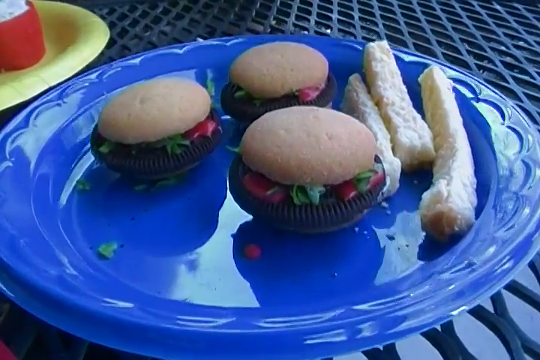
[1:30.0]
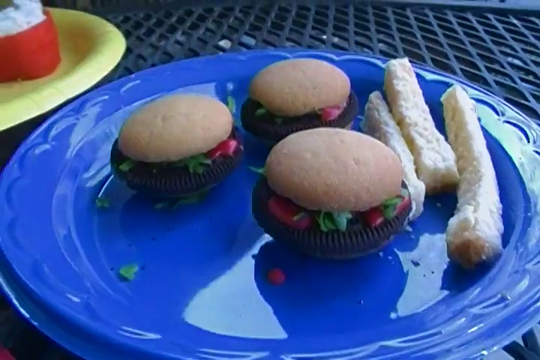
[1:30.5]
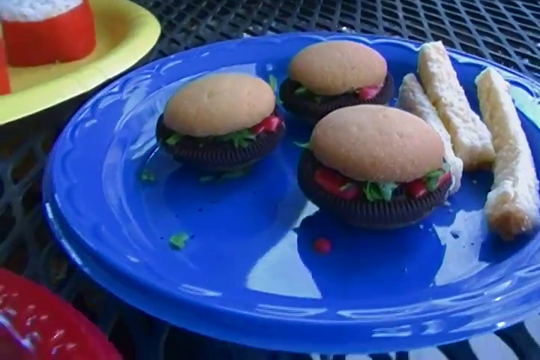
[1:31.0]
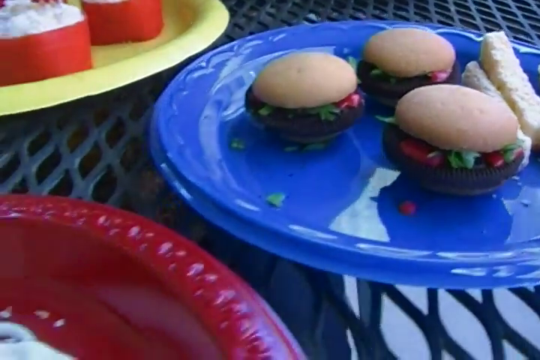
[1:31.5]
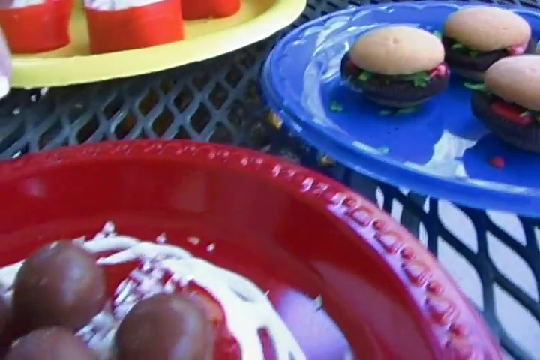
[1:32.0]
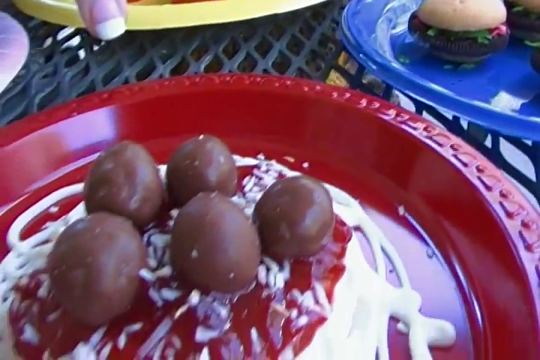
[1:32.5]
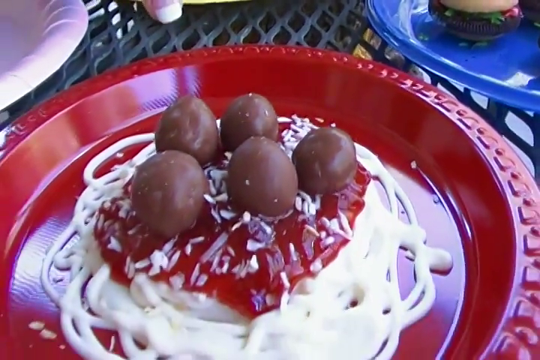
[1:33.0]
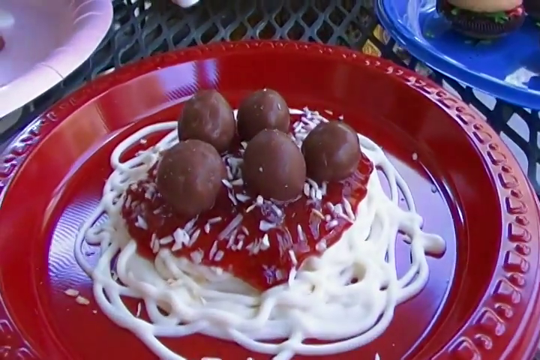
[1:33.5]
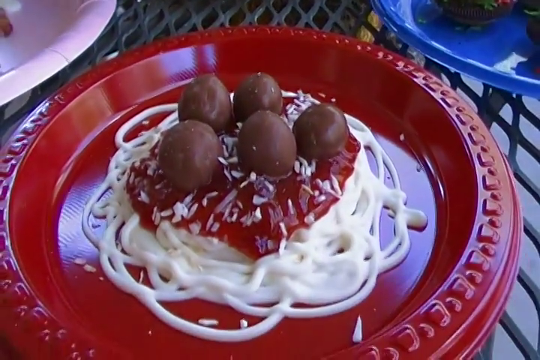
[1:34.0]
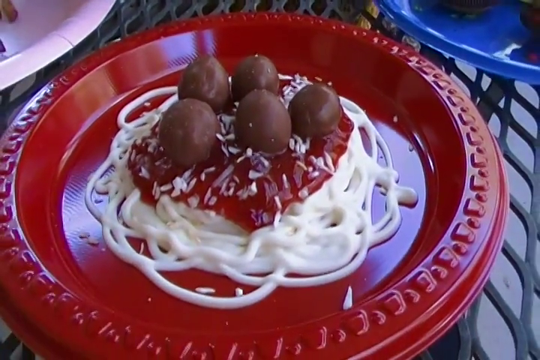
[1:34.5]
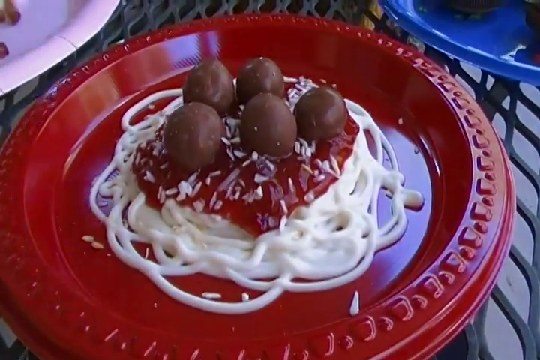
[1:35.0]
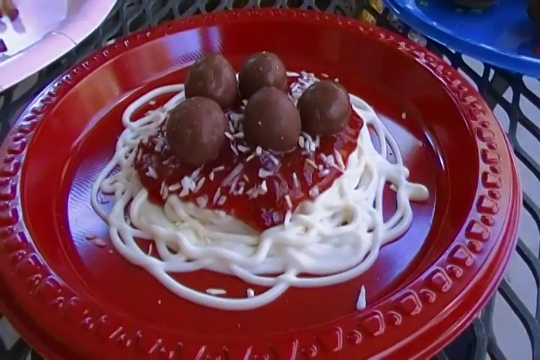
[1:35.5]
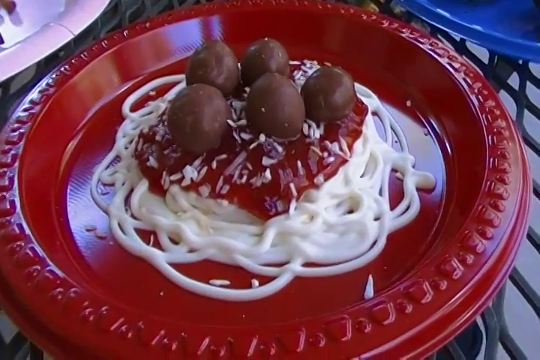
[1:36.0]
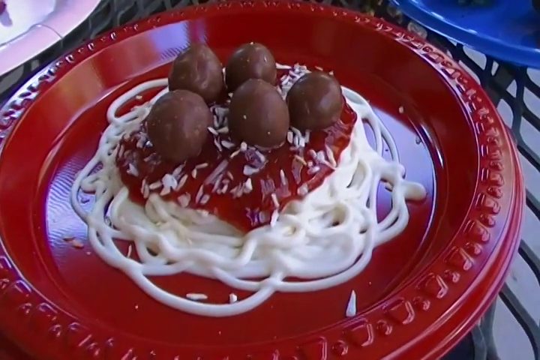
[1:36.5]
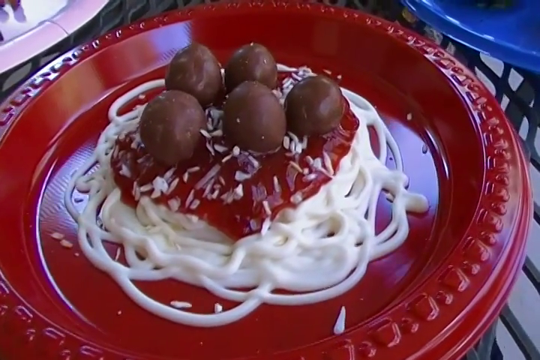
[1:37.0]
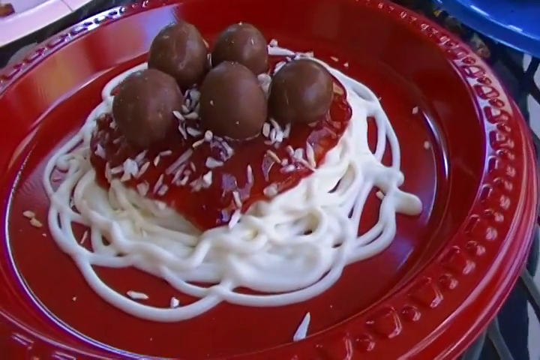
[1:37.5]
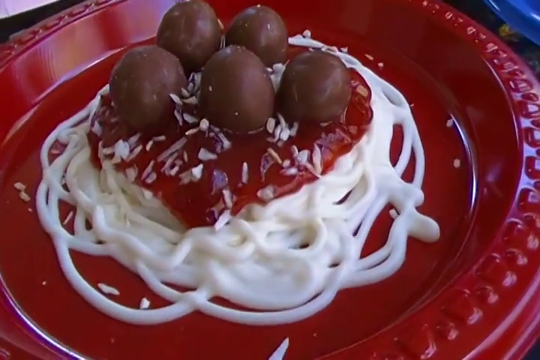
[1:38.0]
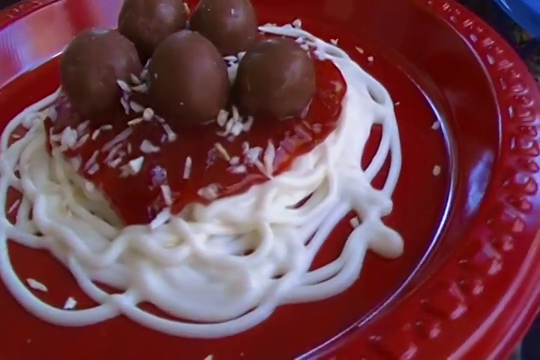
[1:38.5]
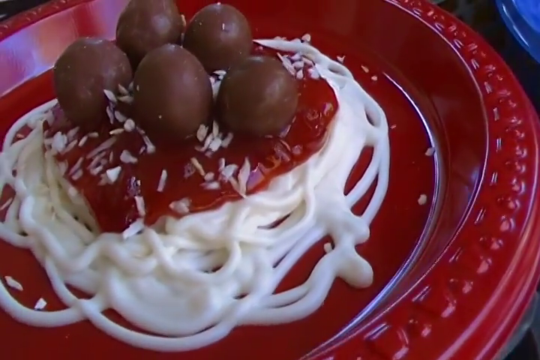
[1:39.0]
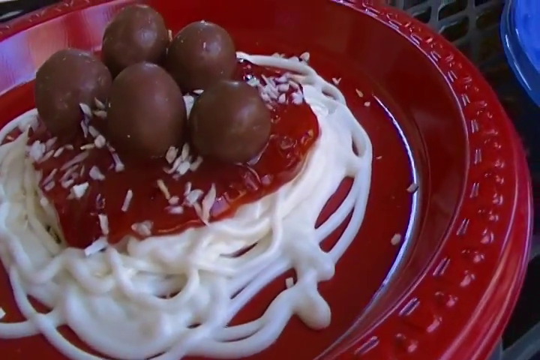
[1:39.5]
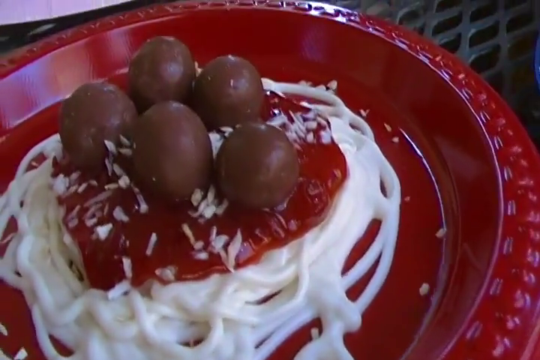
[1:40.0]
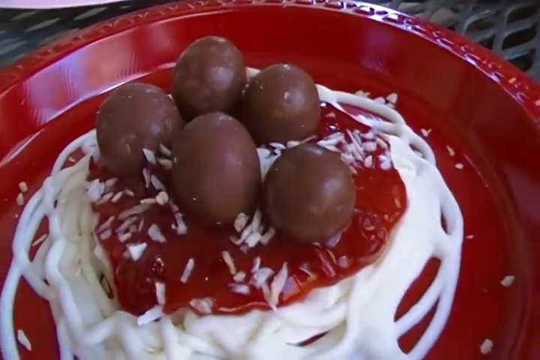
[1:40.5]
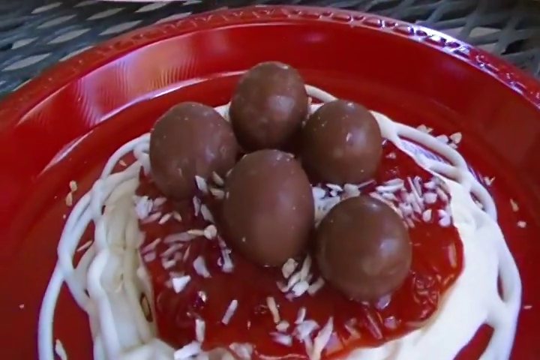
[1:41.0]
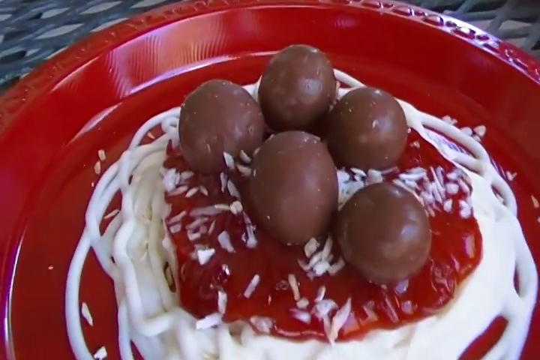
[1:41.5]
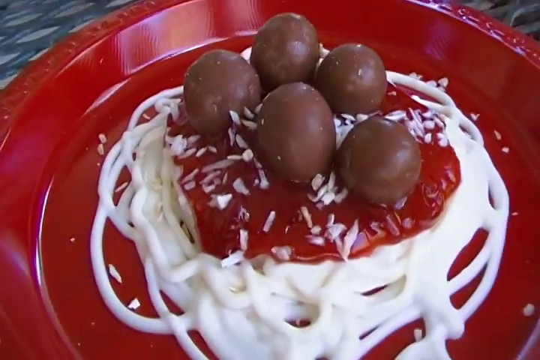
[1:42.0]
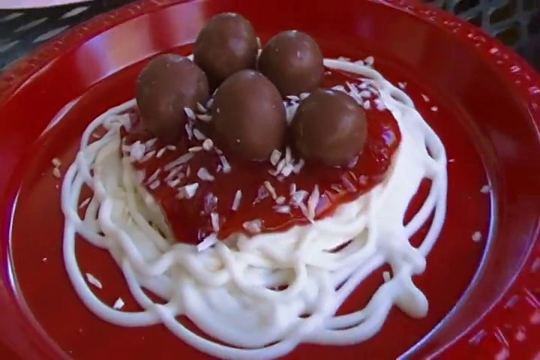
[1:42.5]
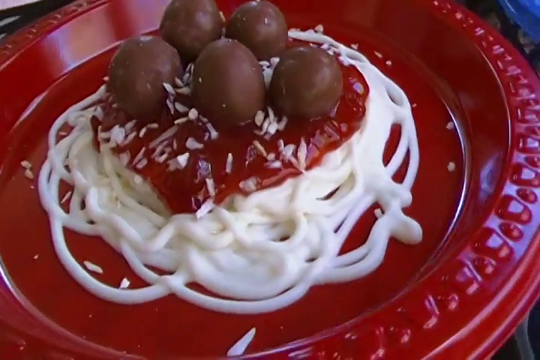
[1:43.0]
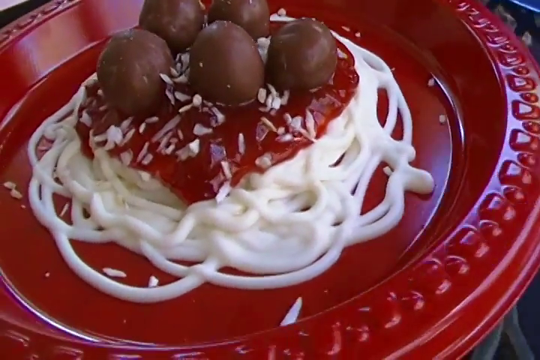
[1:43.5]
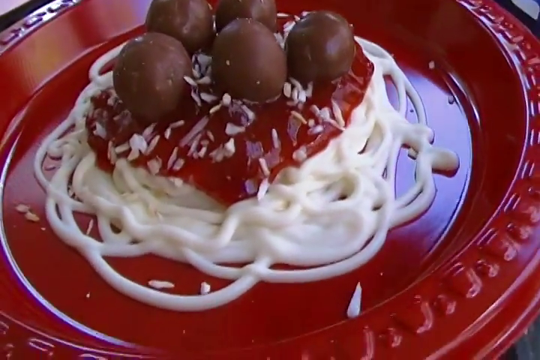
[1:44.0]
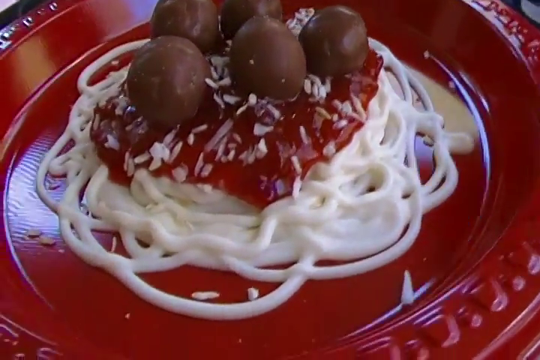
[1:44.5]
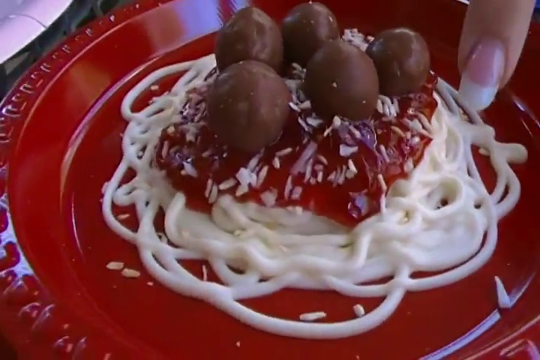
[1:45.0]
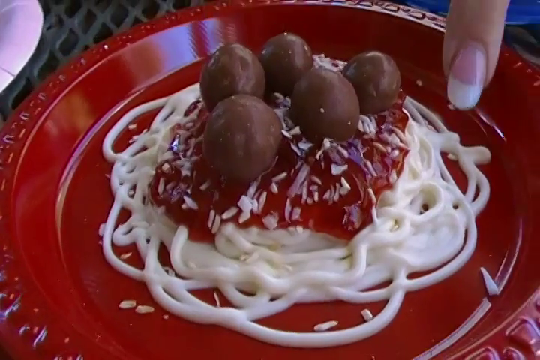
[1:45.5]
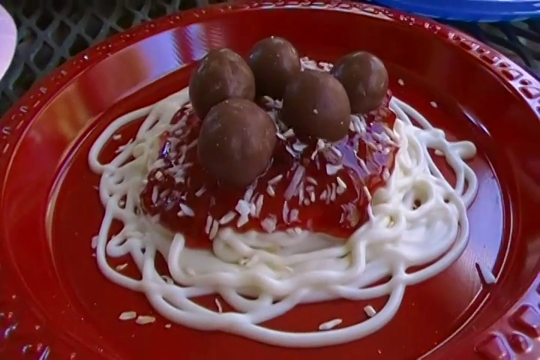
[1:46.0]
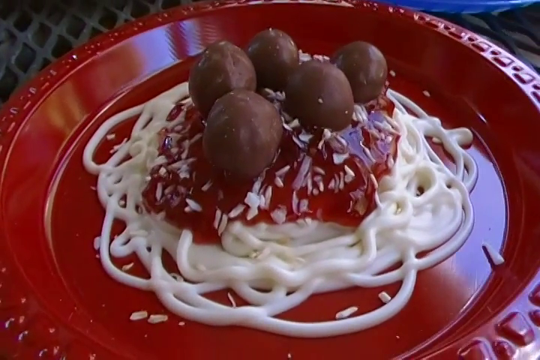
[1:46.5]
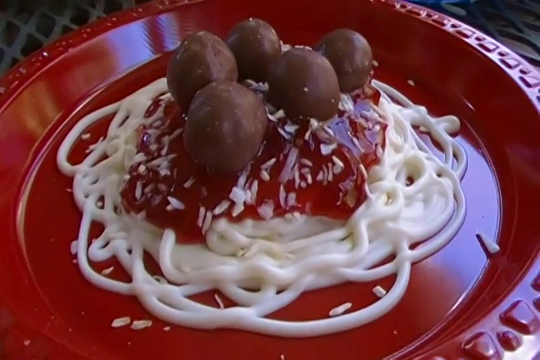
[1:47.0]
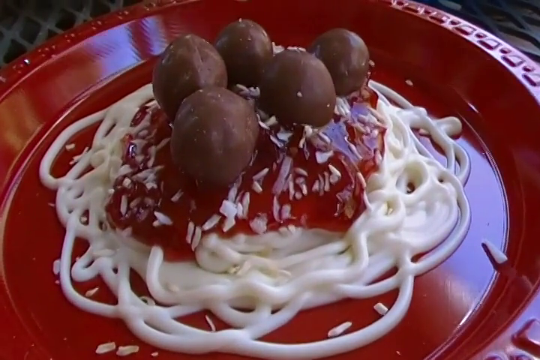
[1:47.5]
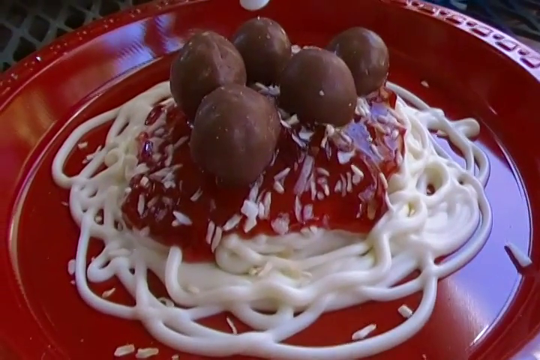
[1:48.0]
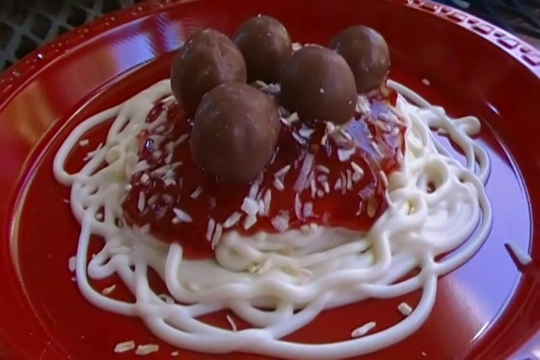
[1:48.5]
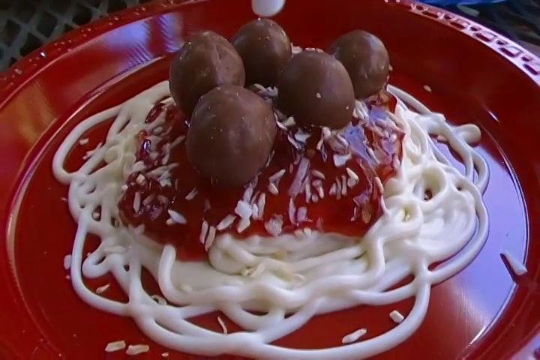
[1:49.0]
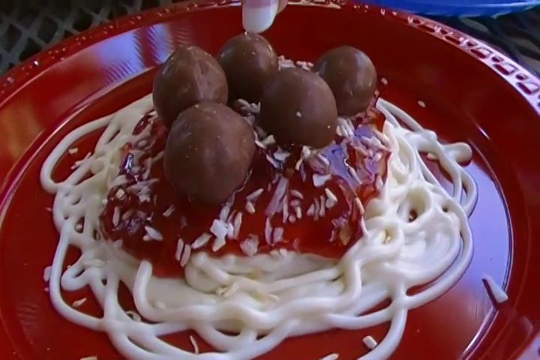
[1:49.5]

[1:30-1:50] The sandwiches are shown, then the view immediately moves to the next plate, the one closest to the camera and farthest from the woman. On a red plate is what looks like some type of makeshift spaghetti, with odd pasta on the bottom and fake pasta on top, and on top of that five items that look like eggs, possibly chocolate or another flavor.